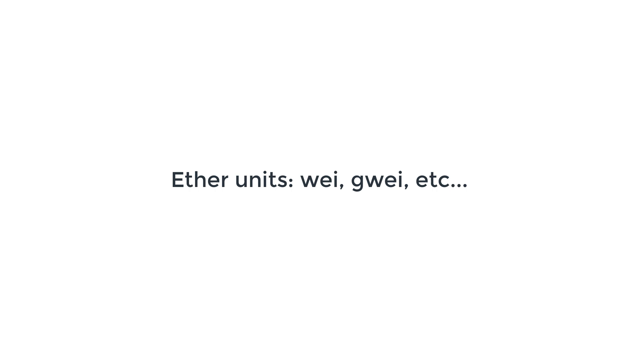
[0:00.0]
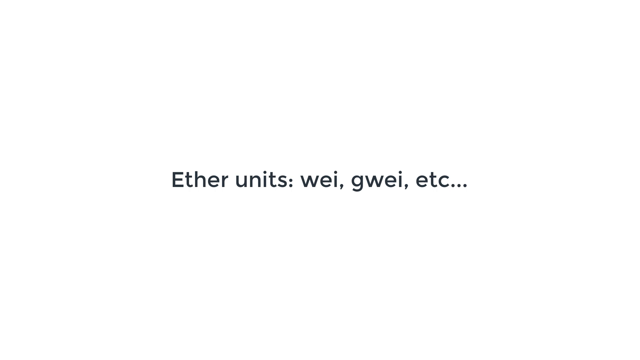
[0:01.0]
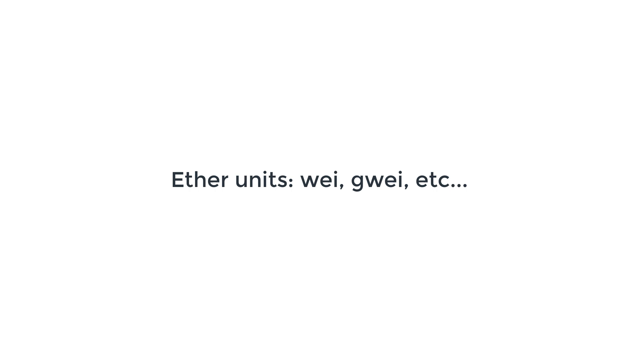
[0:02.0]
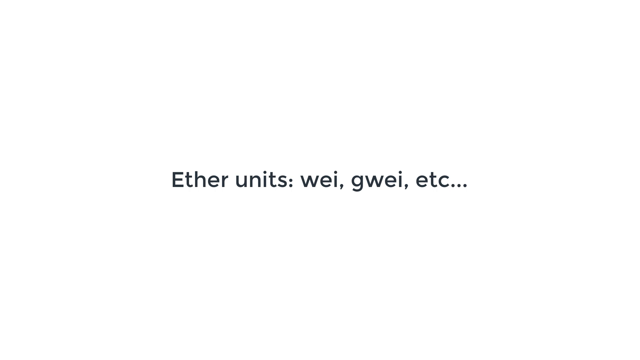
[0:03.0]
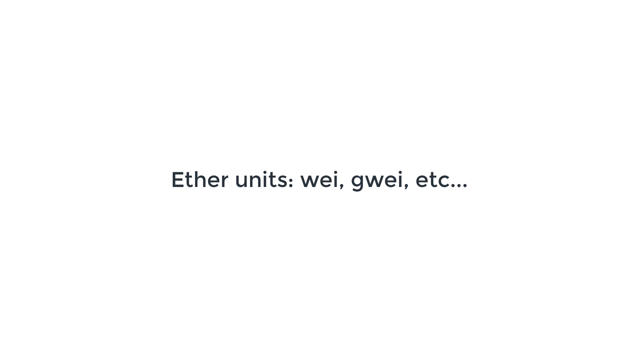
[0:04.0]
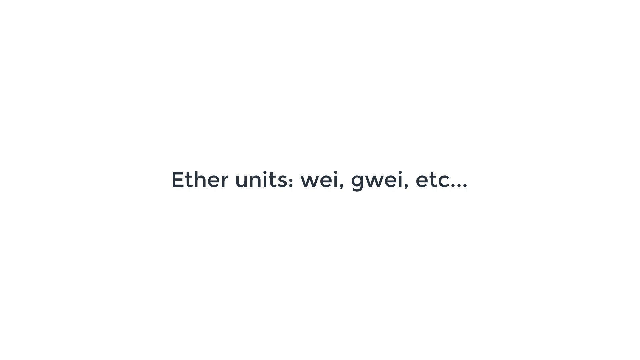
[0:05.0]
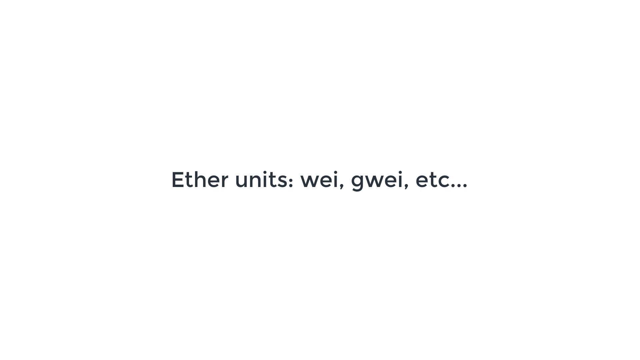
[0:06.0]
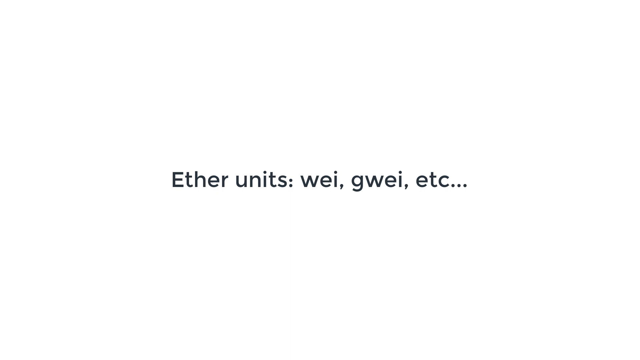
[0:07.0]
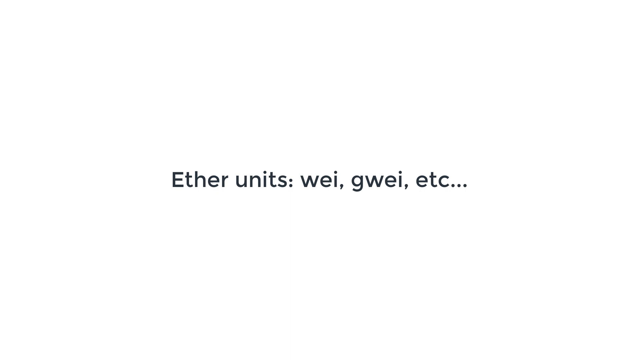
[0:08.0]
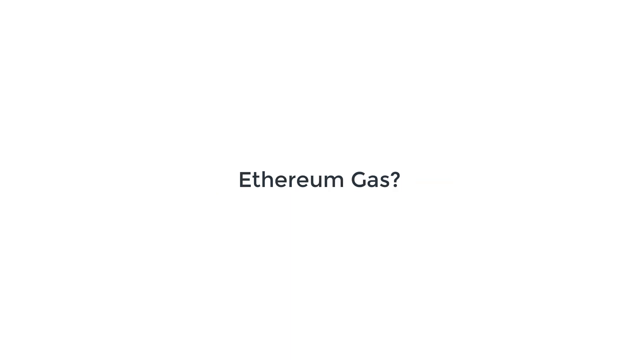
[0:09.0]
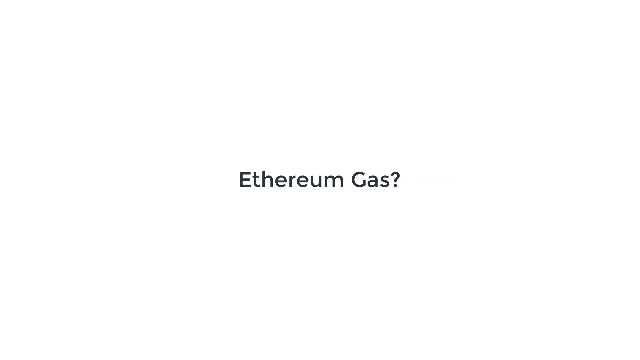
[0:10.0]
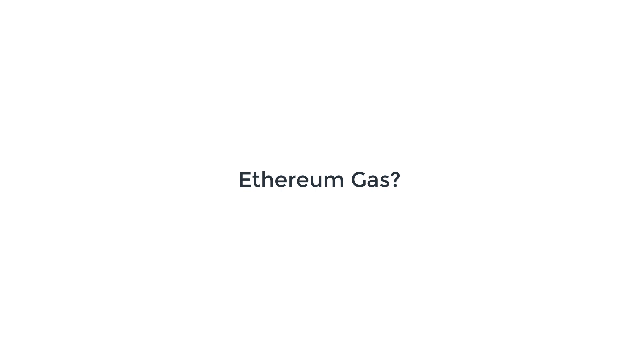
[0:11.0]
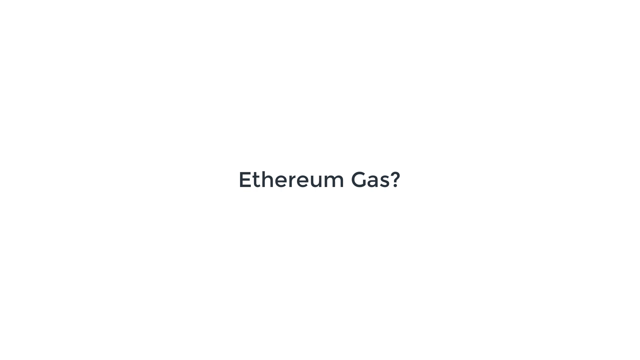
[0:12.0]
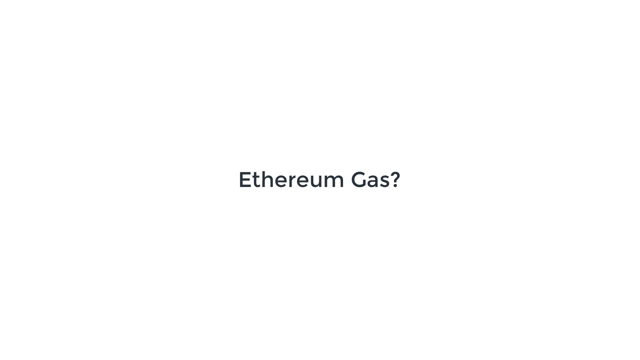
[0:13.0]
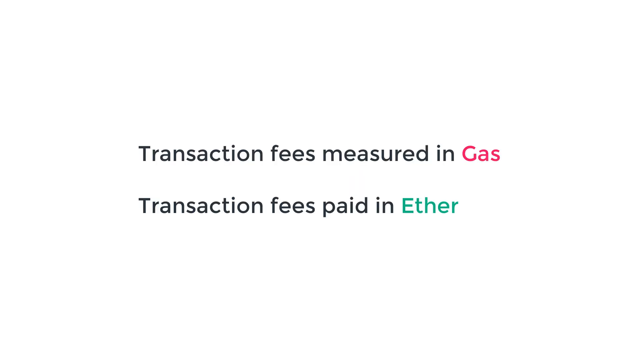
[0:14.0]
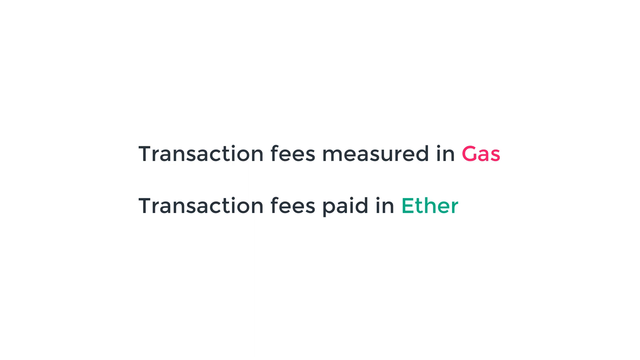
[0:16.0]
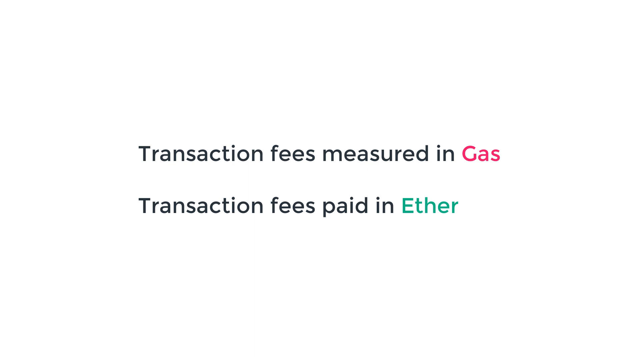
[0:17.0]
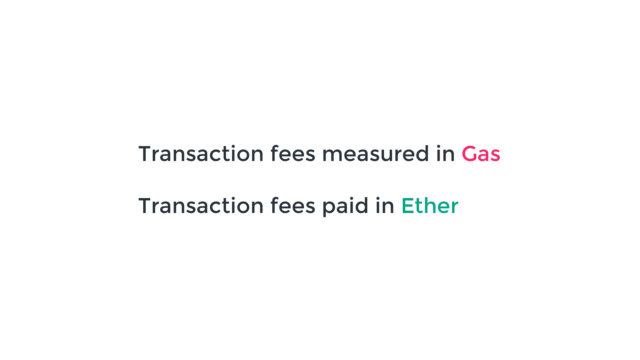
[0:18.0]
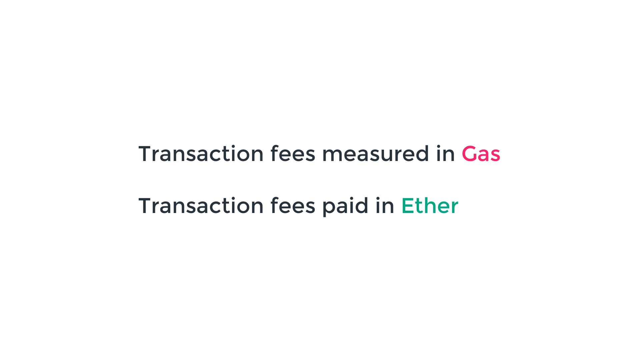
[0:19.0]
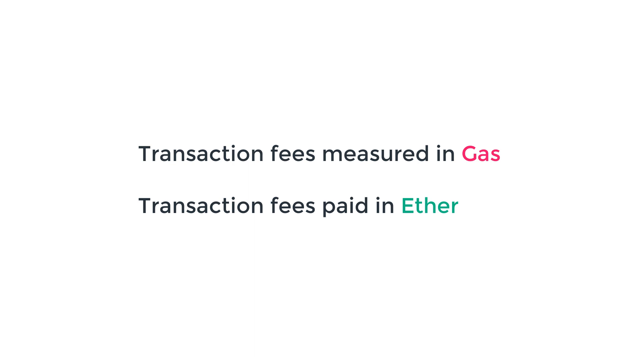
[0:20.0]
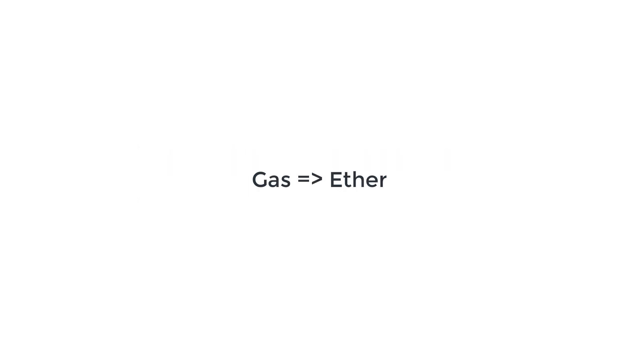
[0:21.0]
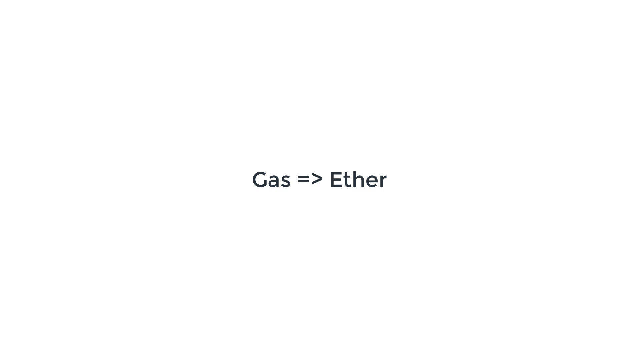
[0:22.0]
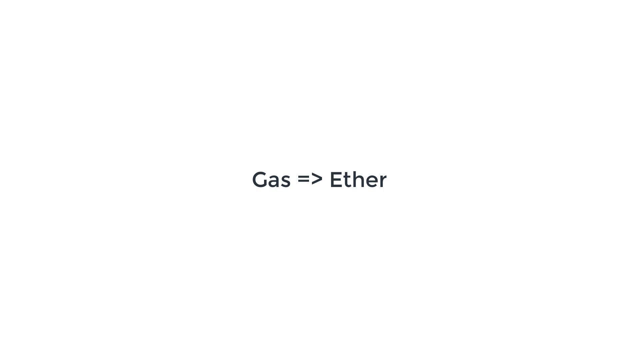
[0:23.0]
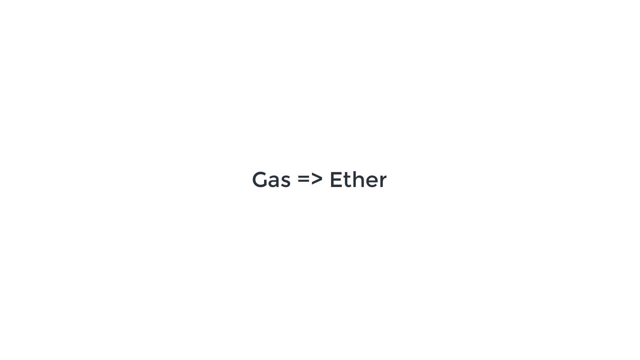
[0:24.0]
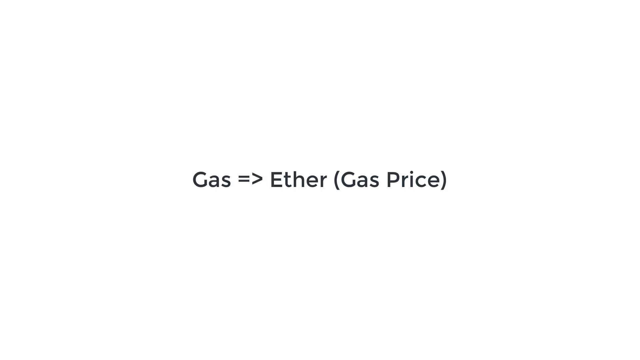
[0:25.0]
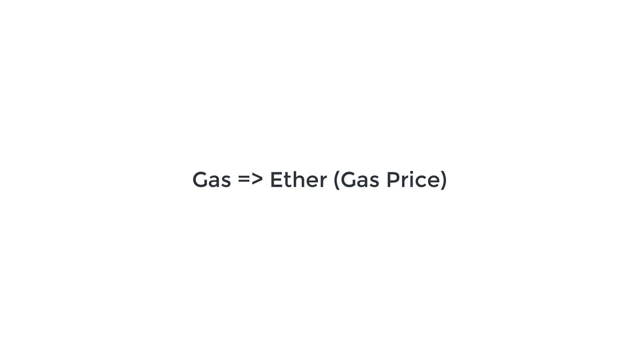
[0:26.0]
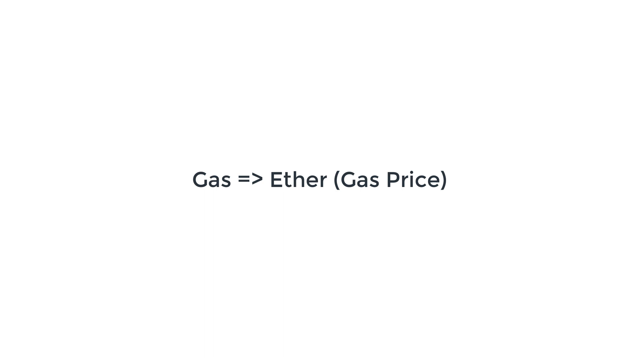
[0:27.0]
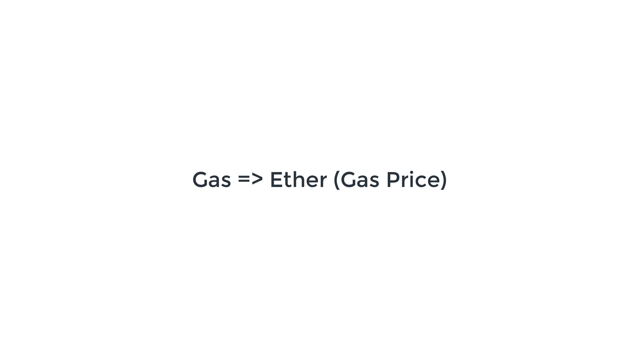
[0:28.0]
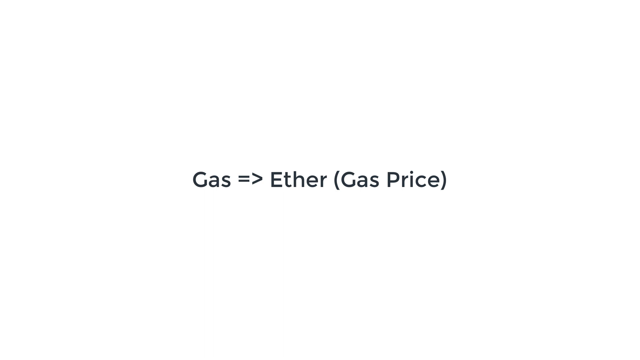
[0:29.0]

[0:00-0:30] A white background appears with a few words in the middle of the screen: "ether units, wei, gwei, etc..." As the video goes on, the page continues with "ethereum gas?" followed by "transaction fees measured in gas" and "transaction fees paid in ether". The word gas is in red and the word ether is in green, while all the other words are in black. The two transaction-fee lines are placed symmetrically on the page. Next the text reads "gas => ether" and then "gas => ether gas price". The whole screen stays white, and the page holds little besides these fairly small words, centered in the middle.